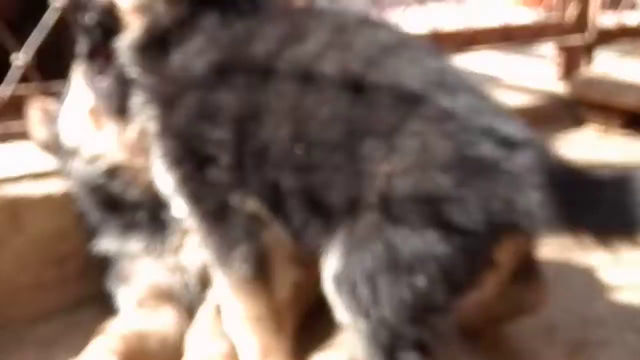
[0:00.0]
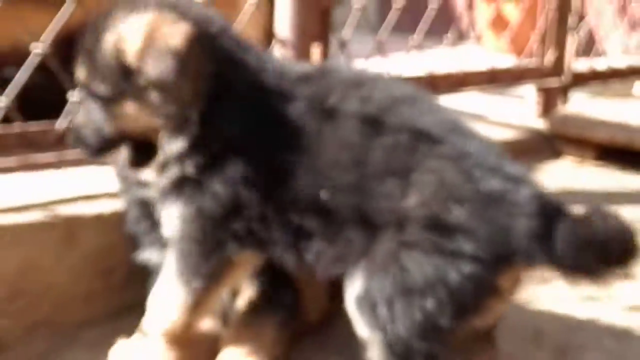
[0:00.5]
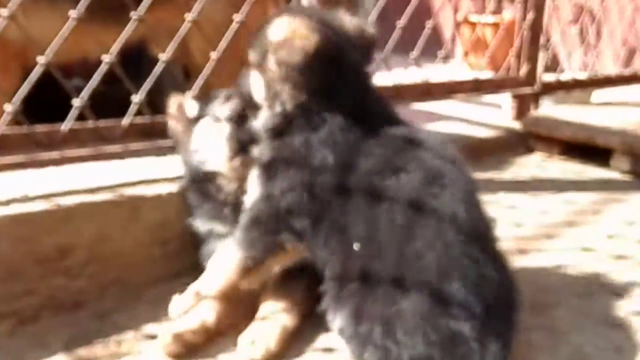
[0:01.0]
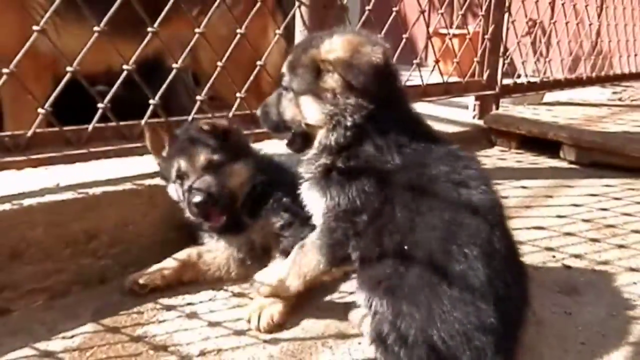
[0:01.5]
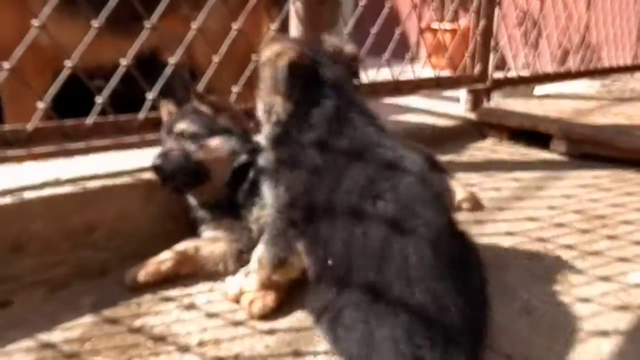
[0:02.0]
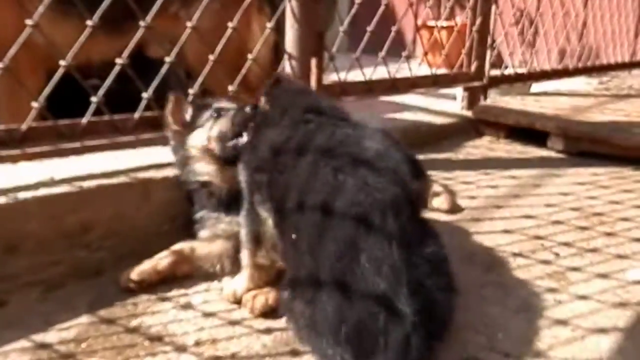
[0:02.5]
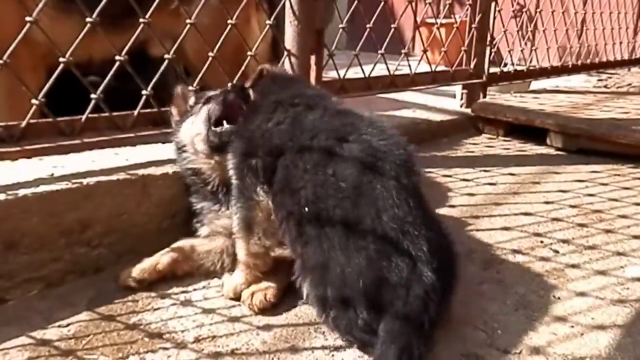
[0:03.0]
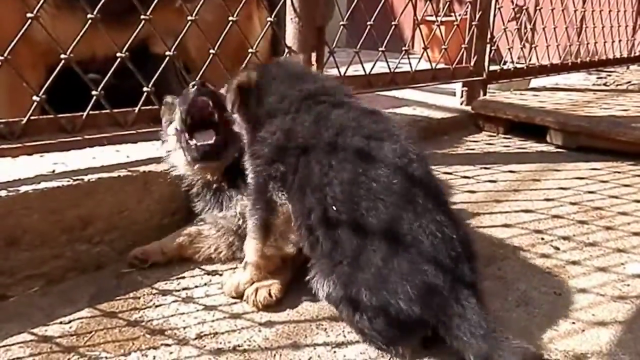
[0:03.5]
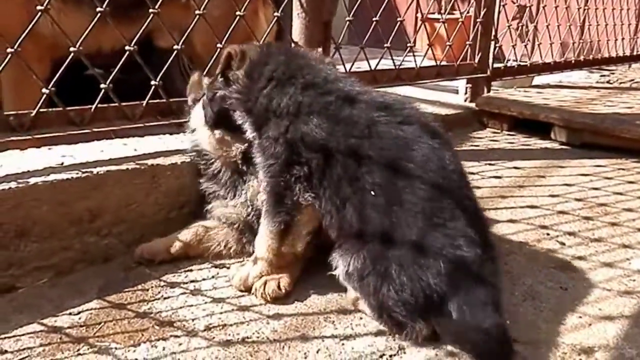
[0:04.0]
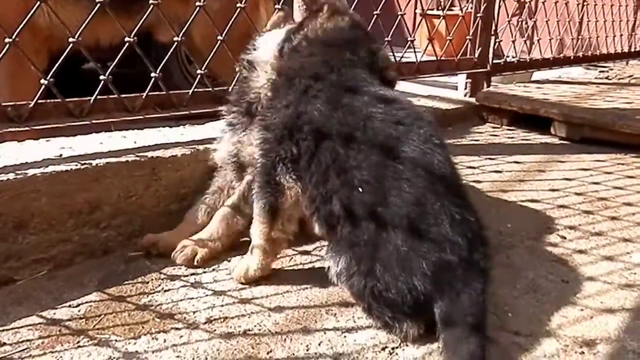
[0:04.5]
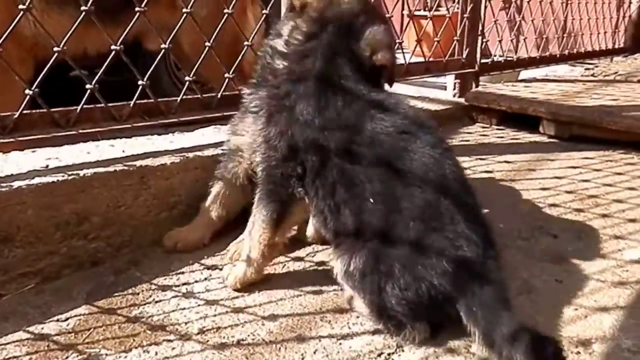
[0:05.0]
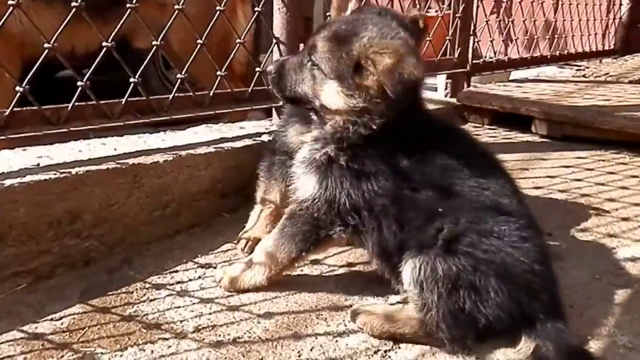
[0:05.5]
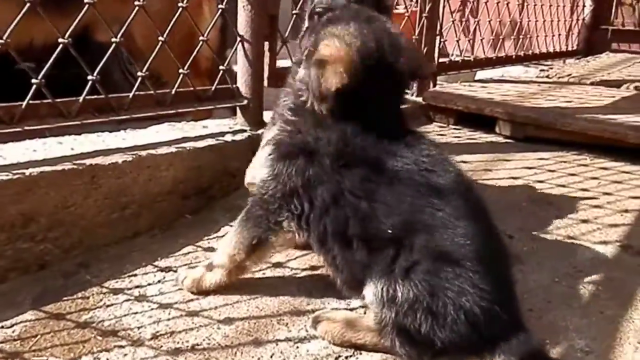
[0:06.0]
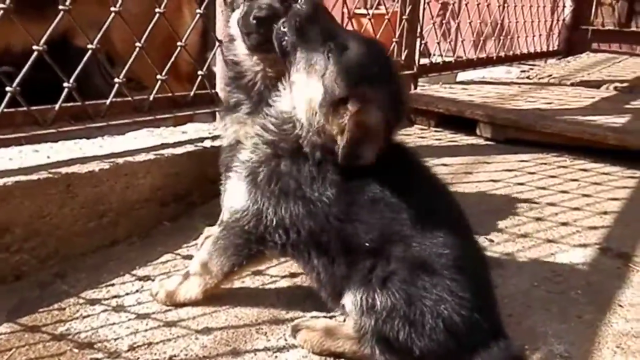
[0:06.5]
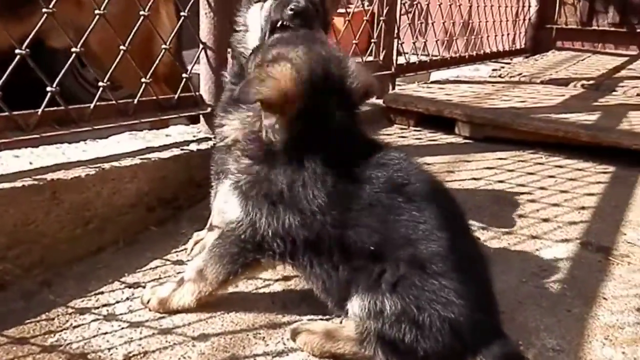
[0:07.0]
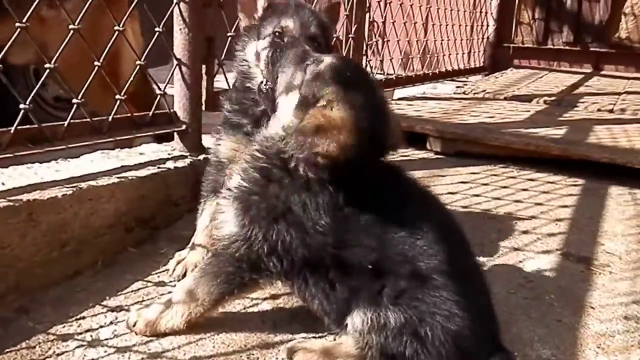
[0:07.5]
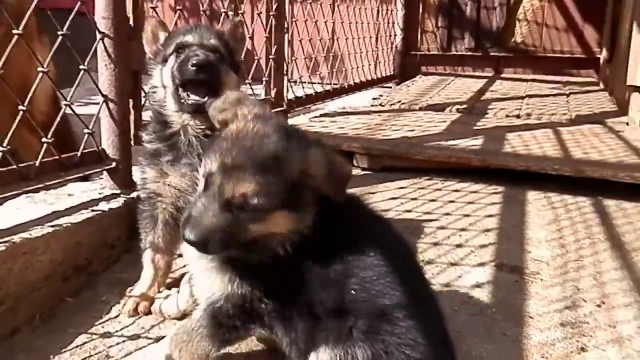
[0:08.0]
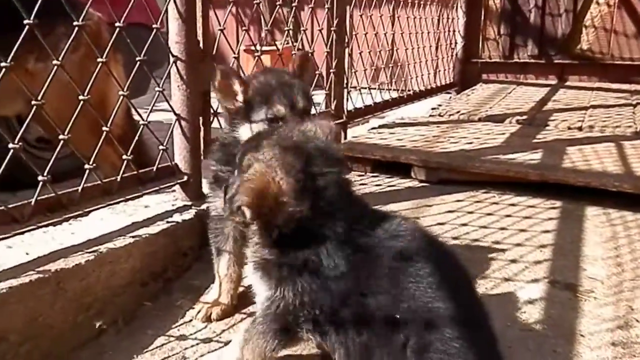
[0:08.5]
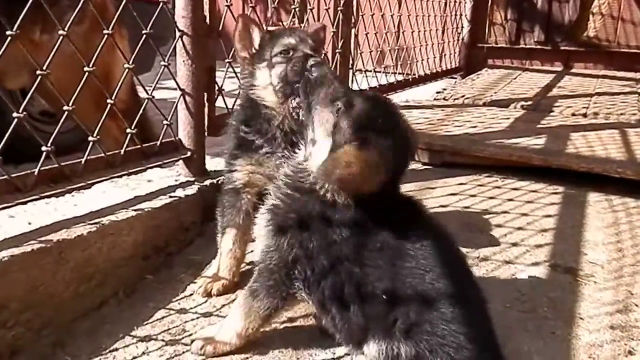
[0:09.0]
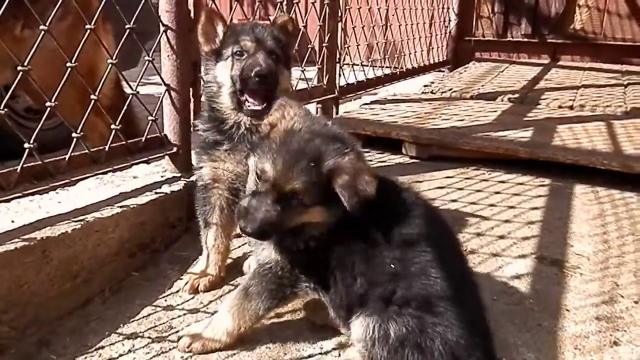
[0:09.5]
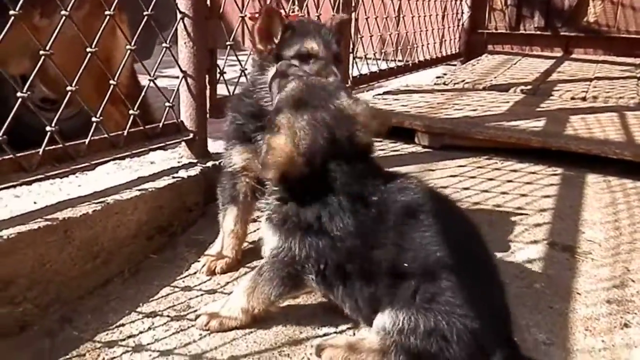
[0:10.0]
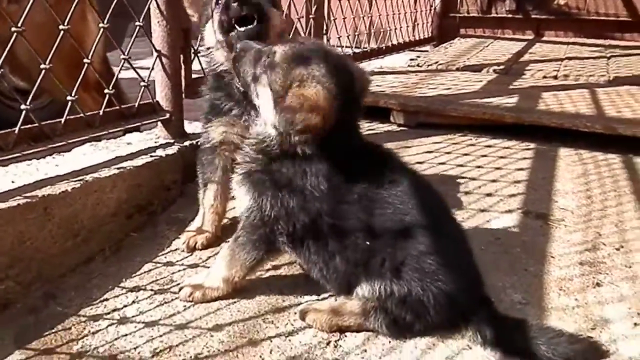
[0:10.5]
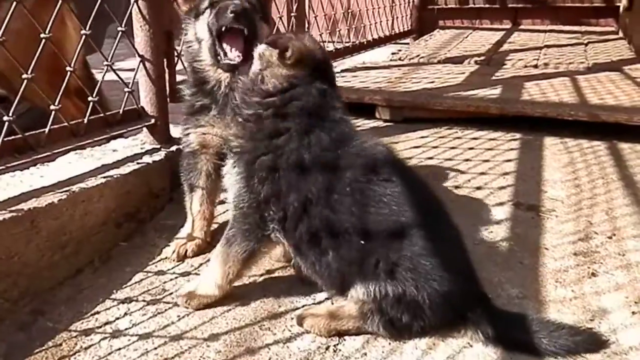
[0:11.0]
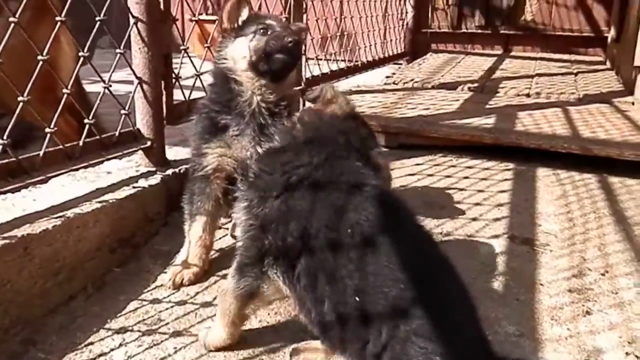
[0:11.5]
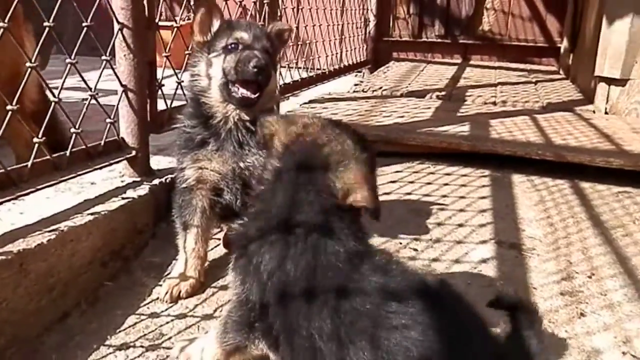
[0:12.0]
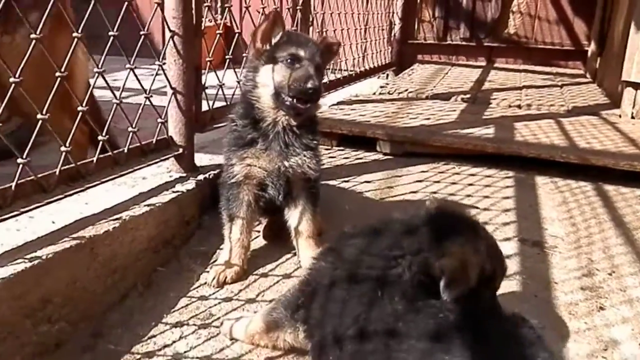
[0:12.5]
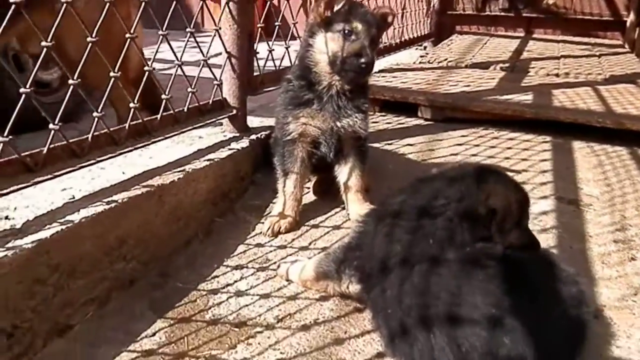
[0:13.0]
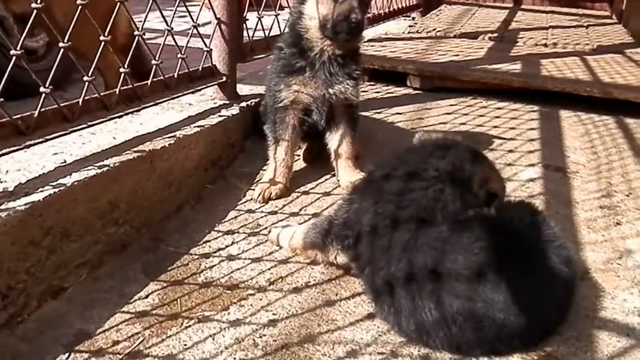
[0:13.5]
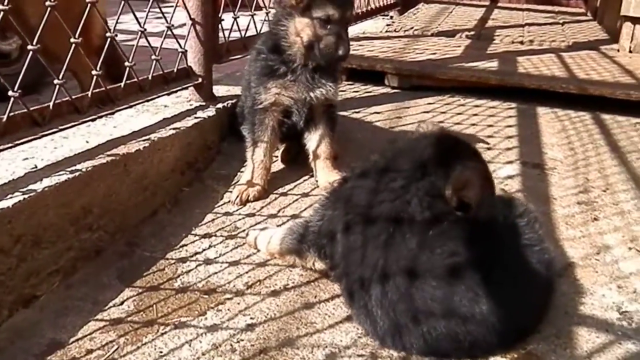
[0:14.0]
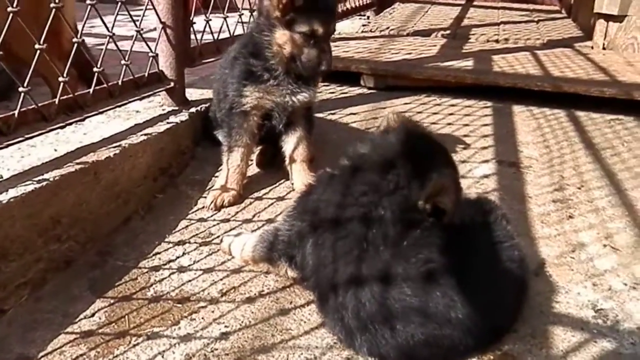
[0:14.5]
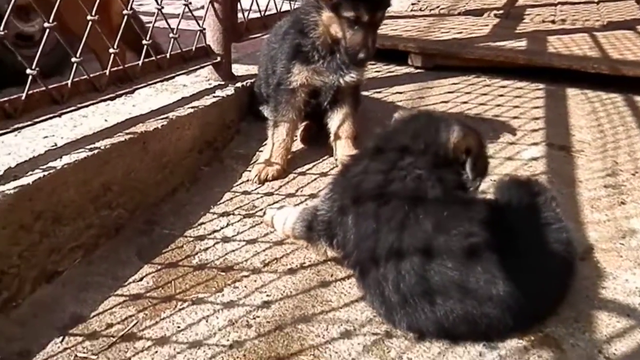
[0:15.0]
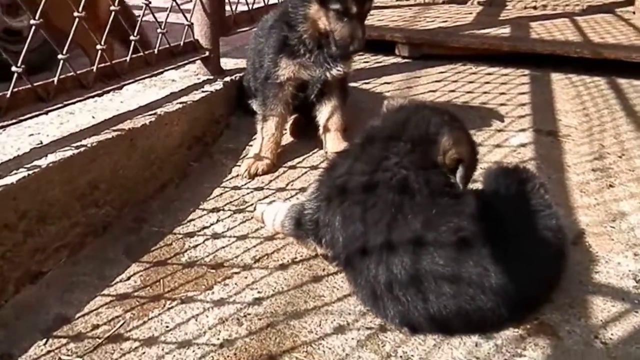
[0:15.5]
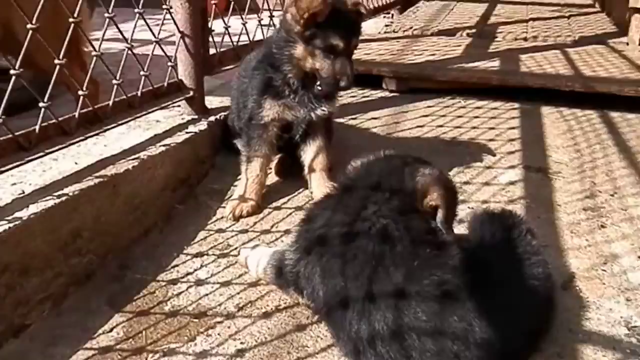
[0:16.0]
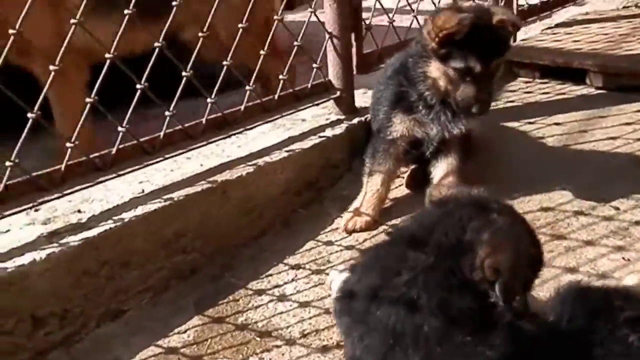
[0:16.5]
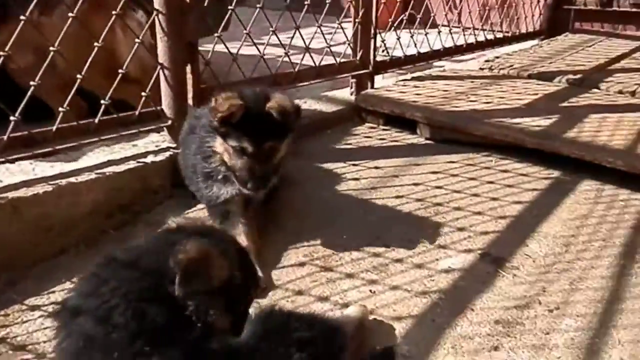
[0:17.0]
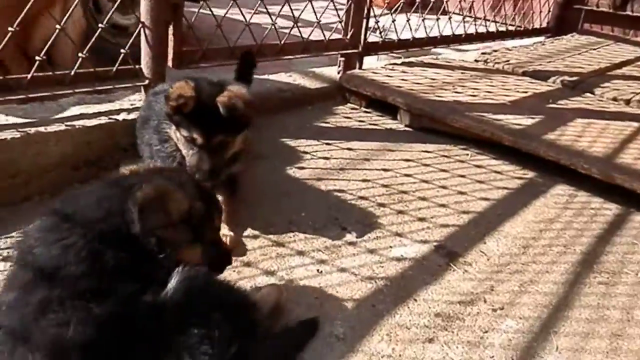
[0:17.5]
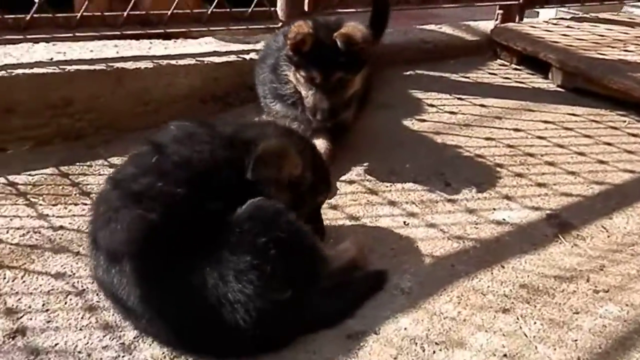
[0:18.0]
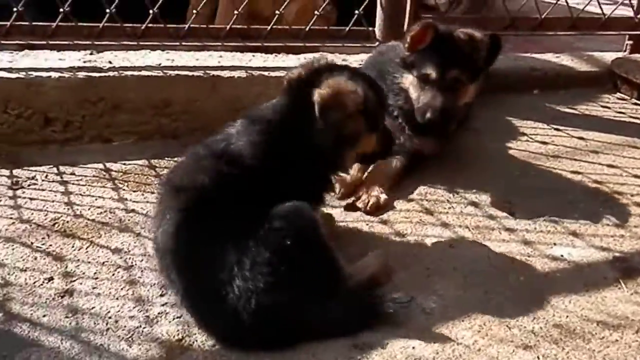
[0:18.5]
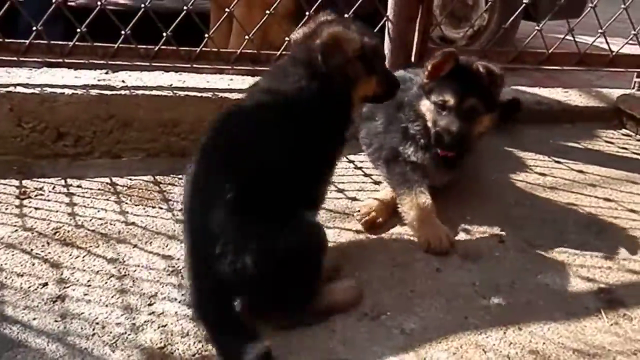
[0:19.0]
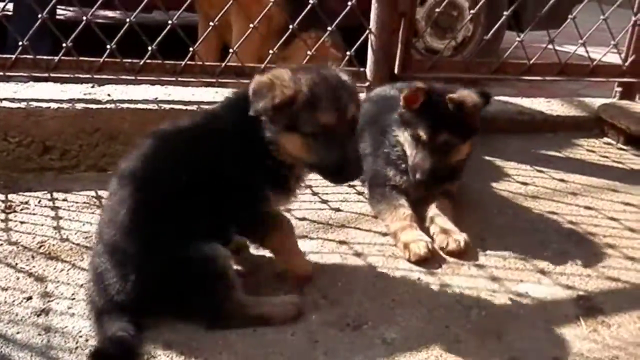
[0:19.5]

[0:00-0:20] Two dogs seem to be playing together, apparently kept inside a yard with the gates closed. They seem very young. Both dogs are black over their bodies and fawn underneath. They seem to enjoy their play, and afterwards one of them rests. A person seems to be standing nearby, but only their feet are visible; the feet look like those of a white person, though it is not clear whether they belong to a man or a woman. The two dogs do not seem to notice the person and keep on playing.